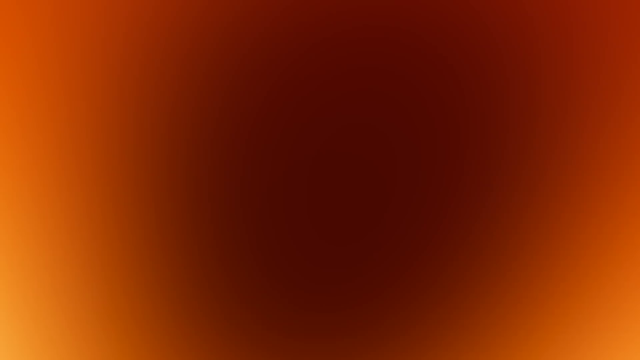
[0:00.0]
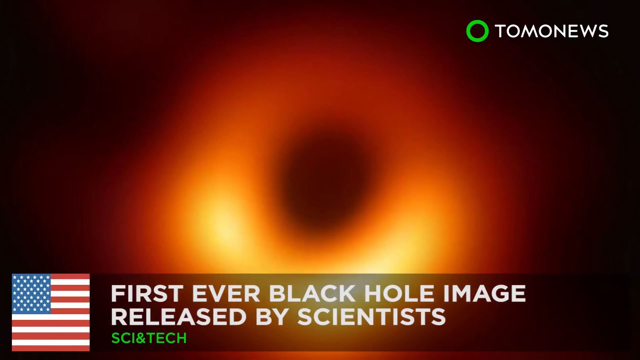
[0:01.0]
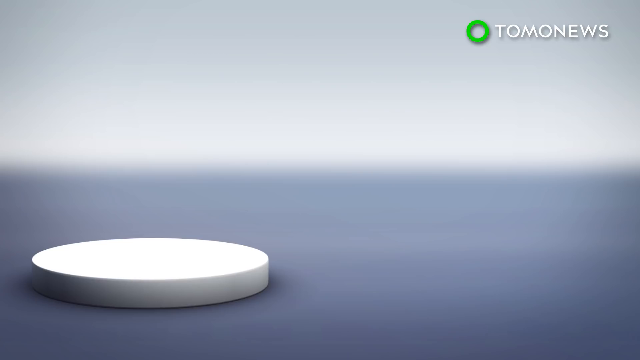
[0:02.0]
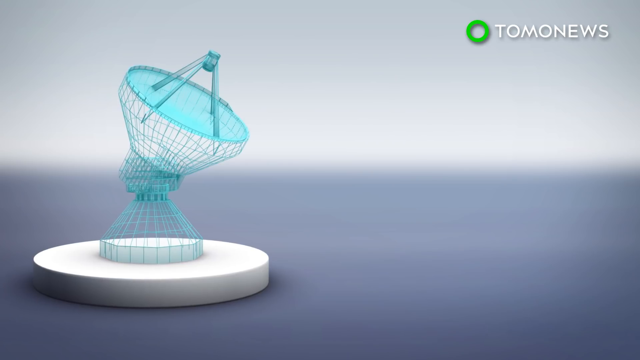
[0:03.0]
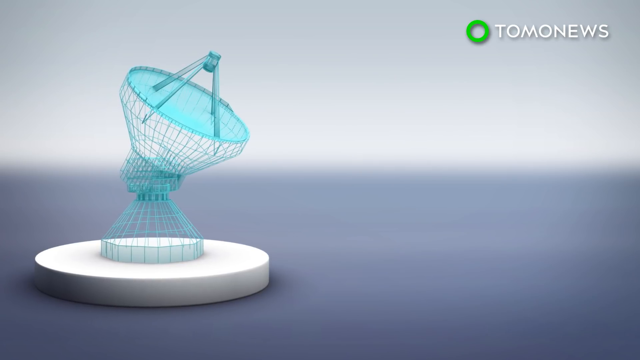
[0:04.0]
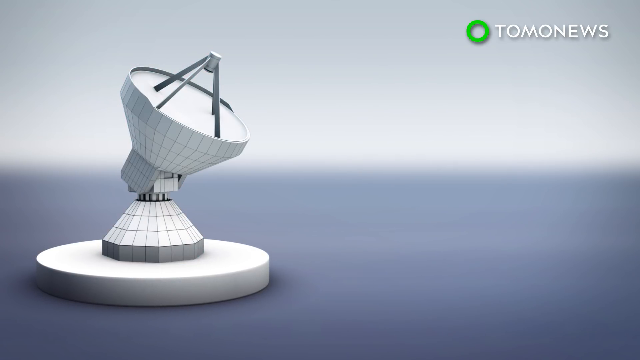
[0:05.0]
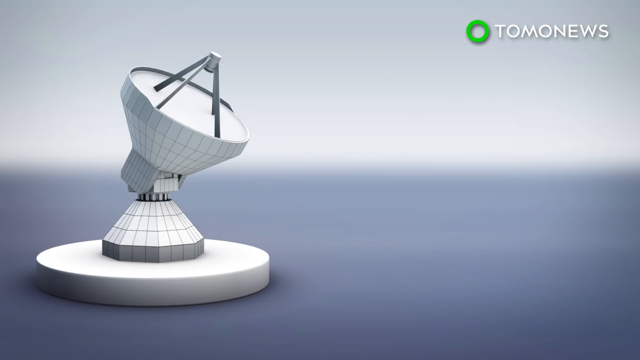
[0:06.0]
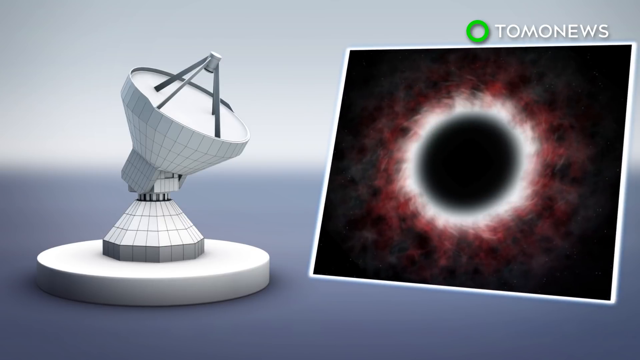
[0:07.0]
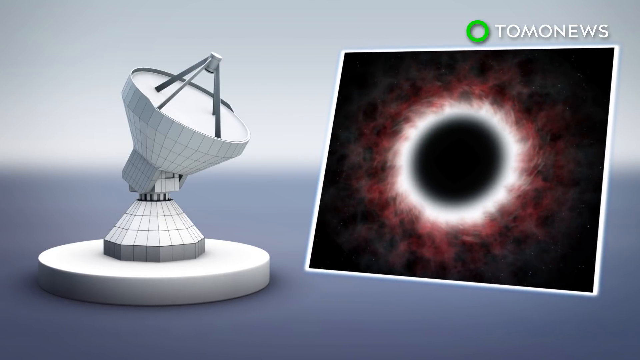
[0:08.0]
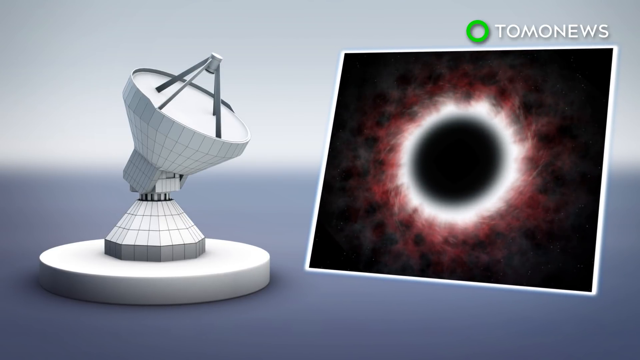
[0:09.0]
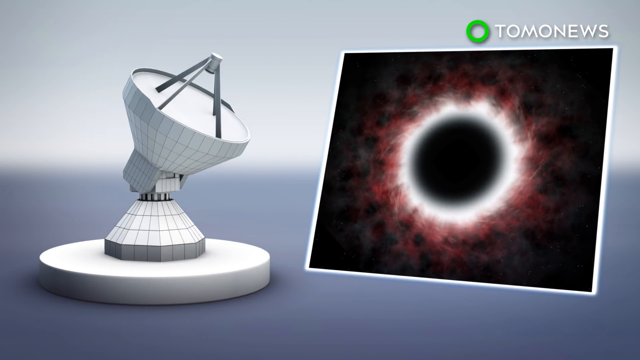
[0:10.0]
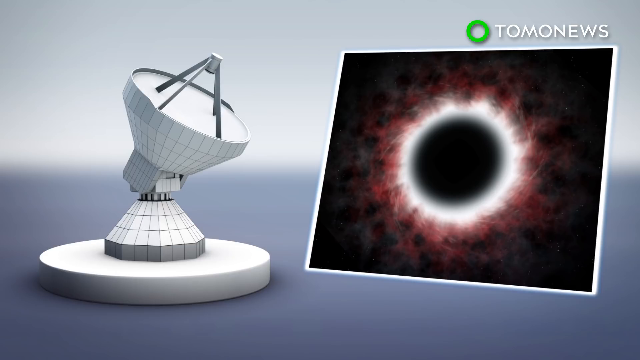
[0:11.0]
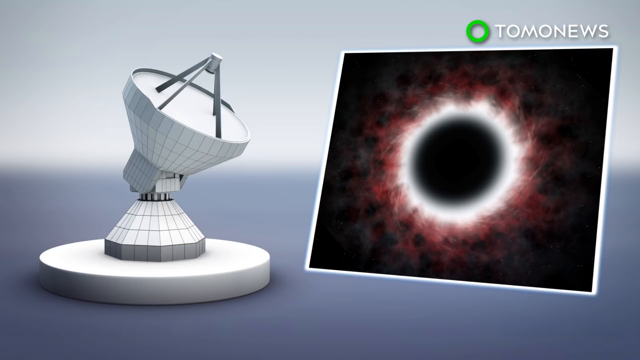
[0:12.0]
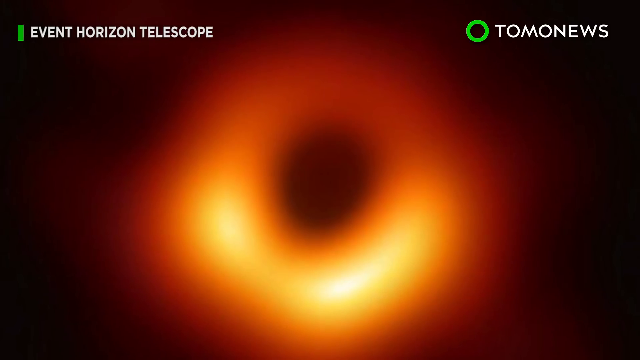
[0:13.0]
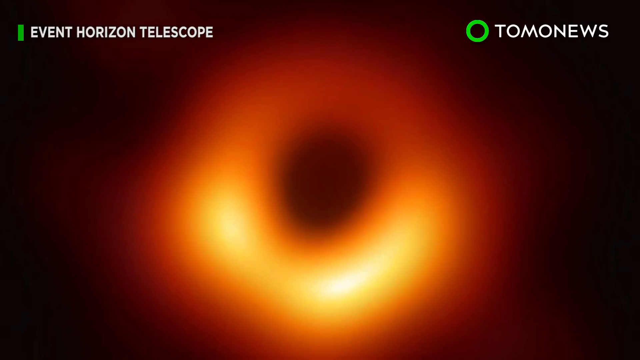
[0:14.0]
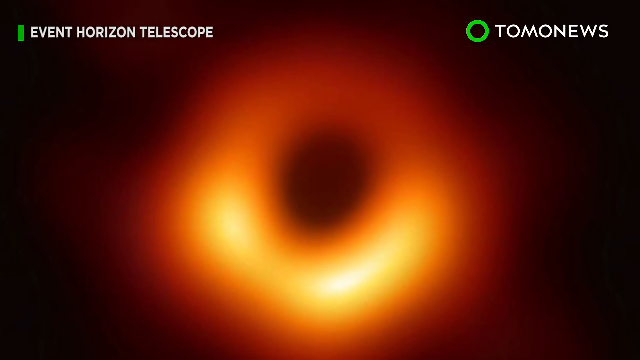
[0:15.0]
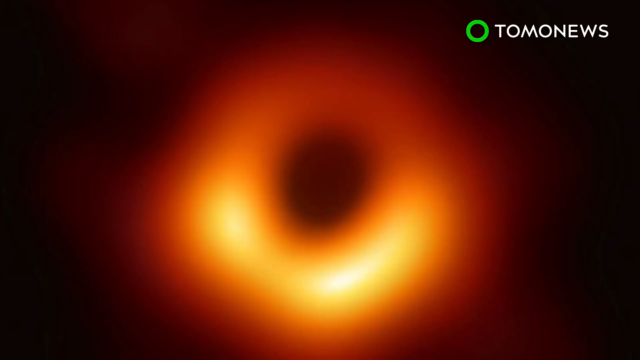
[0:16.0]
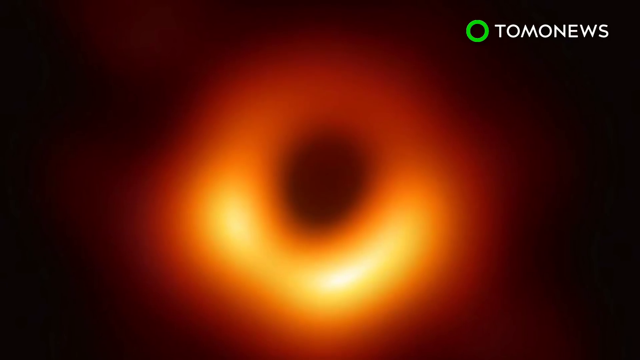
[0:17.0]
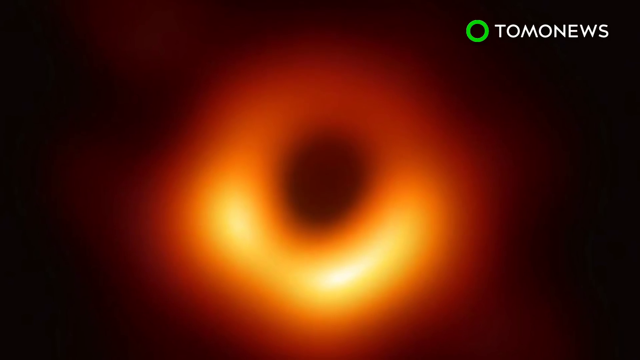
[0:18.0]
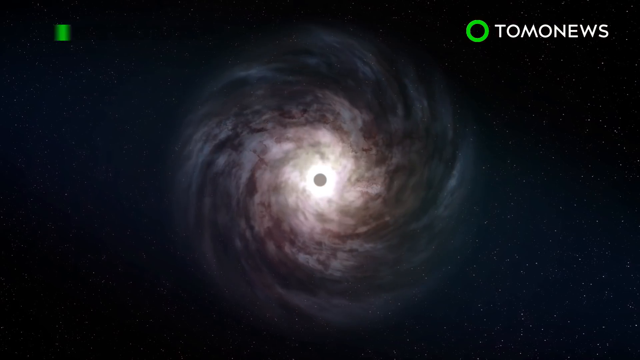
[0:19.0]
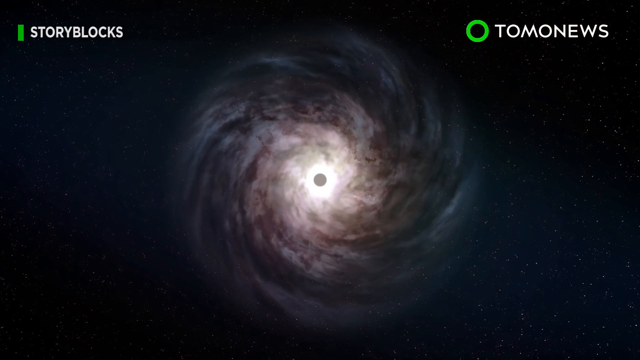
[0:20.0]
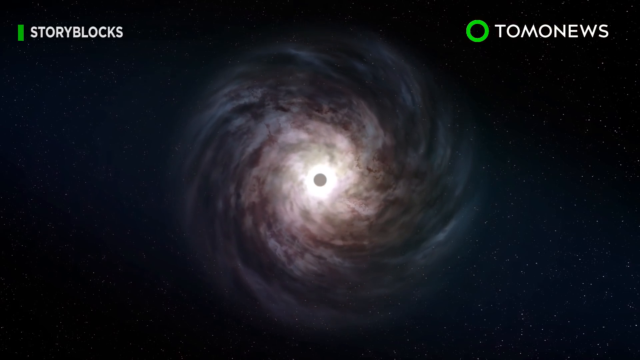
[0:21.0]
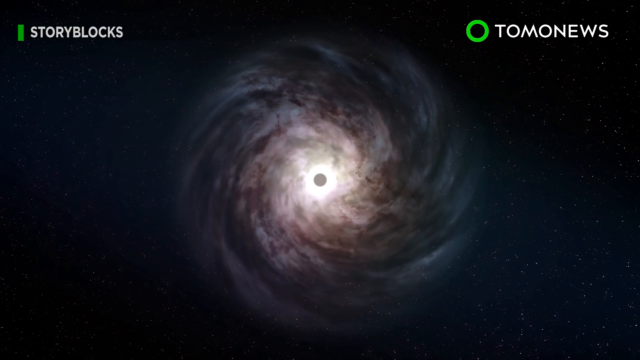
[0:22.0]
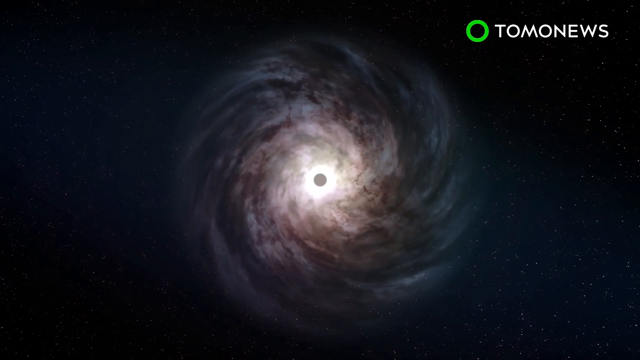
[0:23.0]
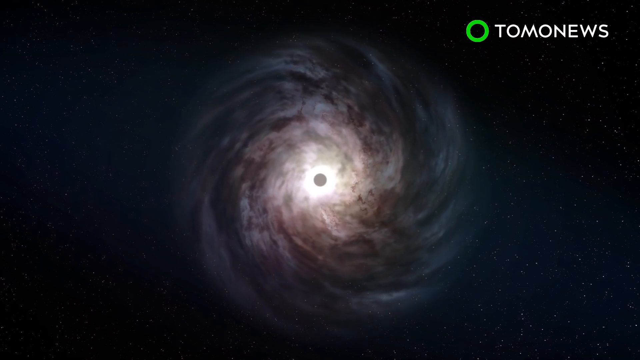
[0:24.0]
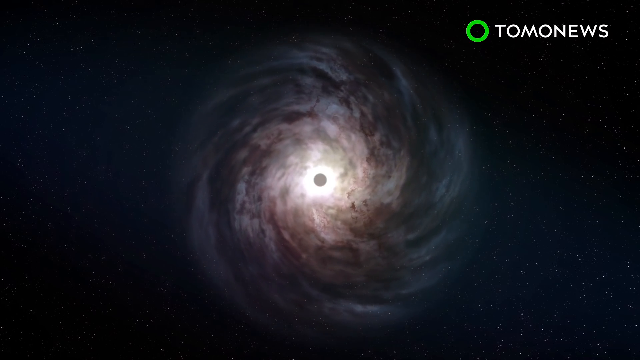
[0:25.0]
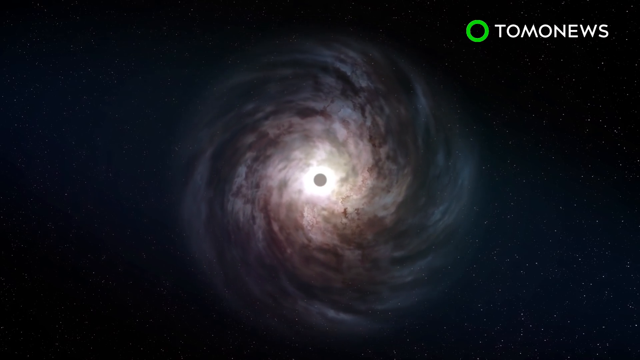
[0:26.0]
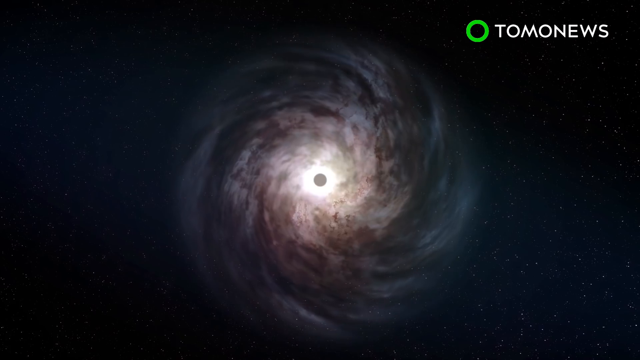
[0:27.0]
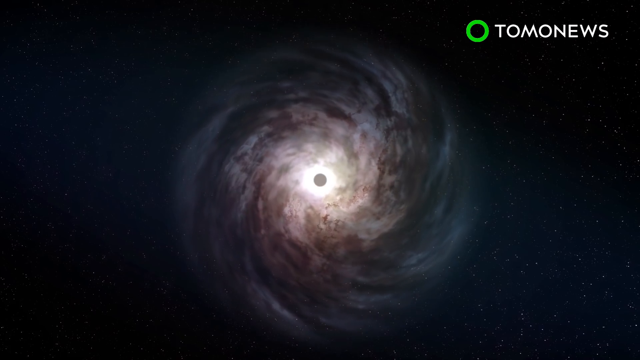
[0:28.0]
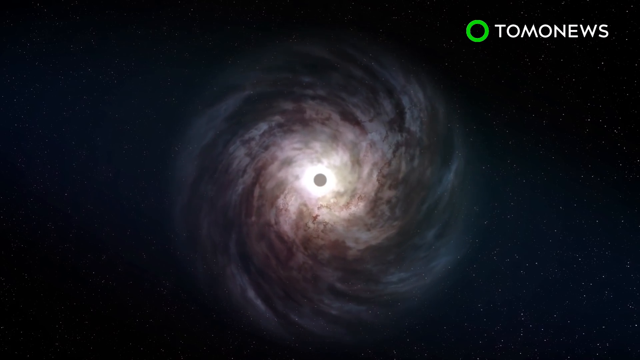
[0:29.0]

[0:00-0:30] A TomoNews video shows a satellite. The video's colours are red and orange, like a sun, and the moon looks orange or very brown.